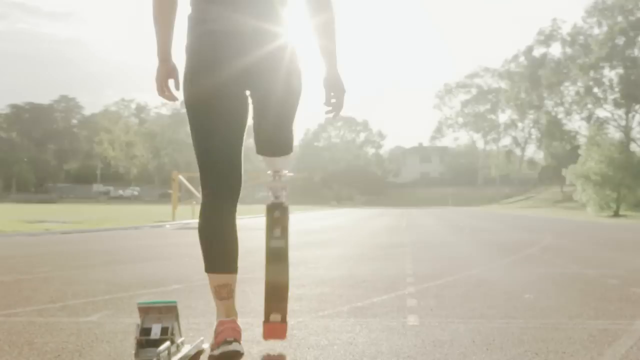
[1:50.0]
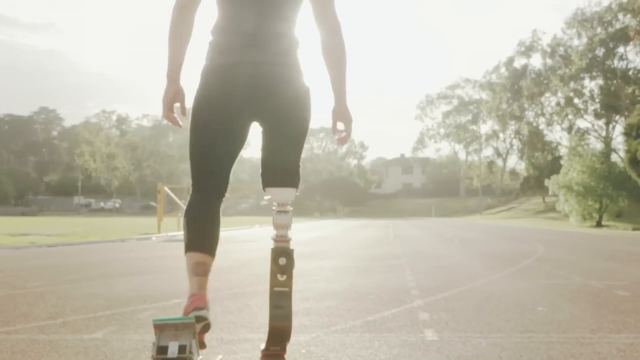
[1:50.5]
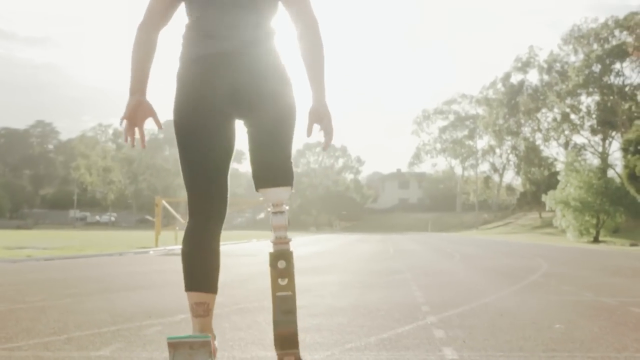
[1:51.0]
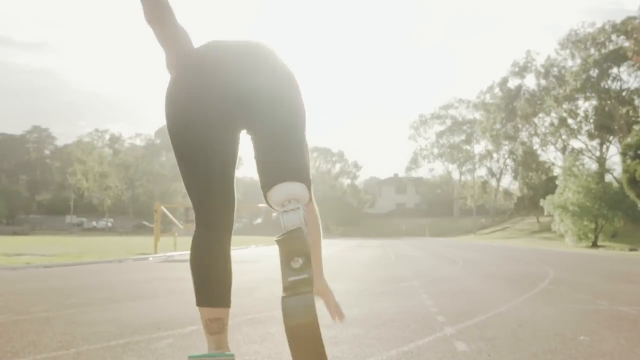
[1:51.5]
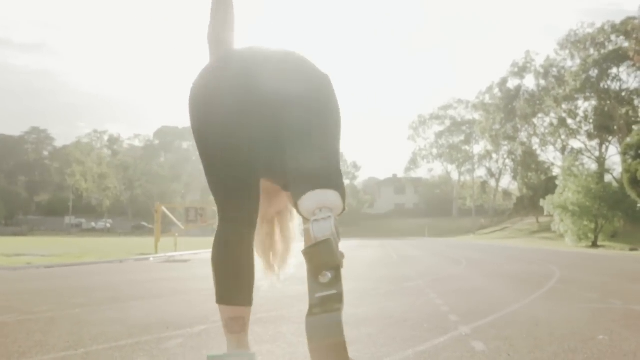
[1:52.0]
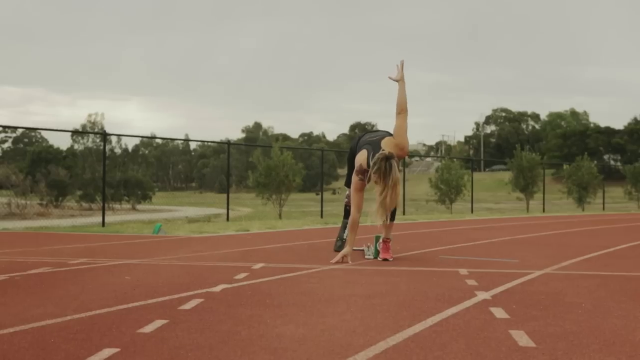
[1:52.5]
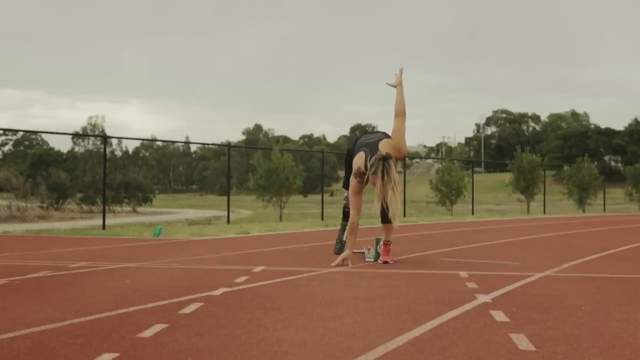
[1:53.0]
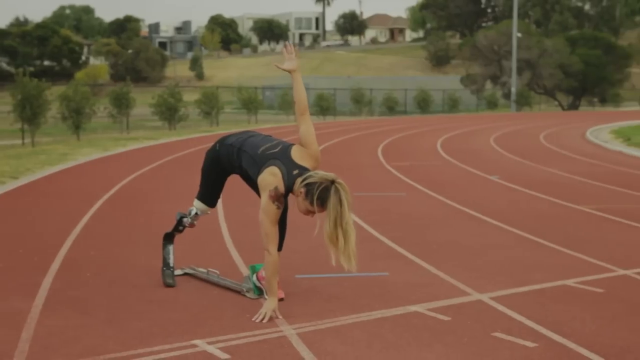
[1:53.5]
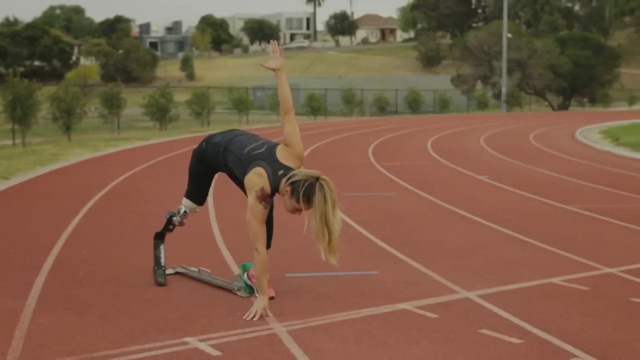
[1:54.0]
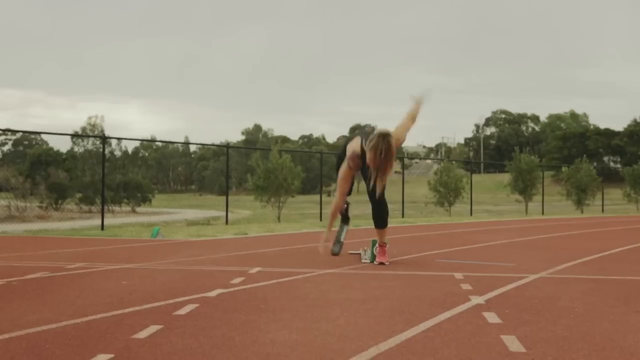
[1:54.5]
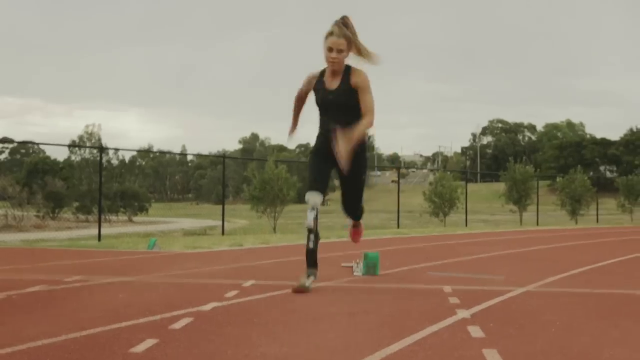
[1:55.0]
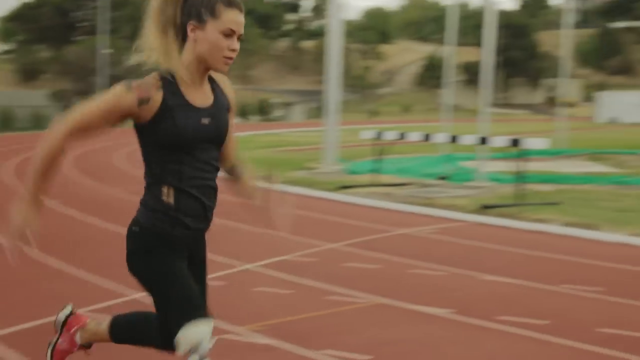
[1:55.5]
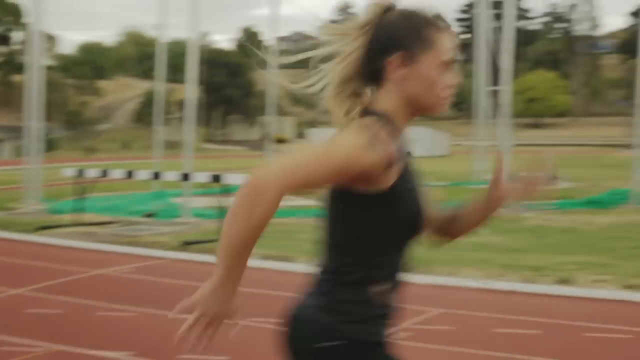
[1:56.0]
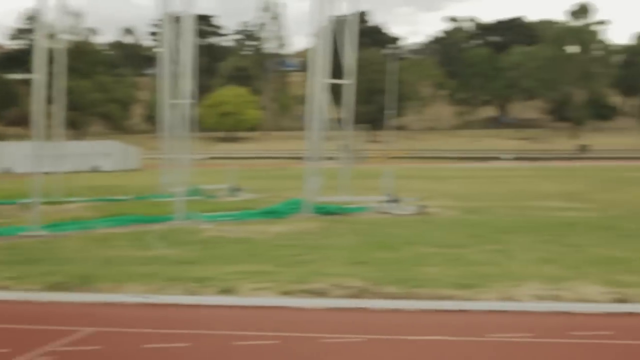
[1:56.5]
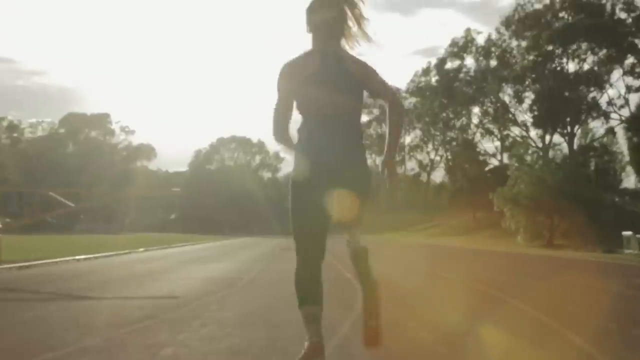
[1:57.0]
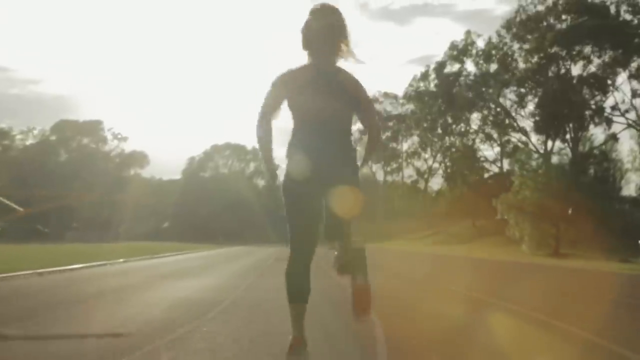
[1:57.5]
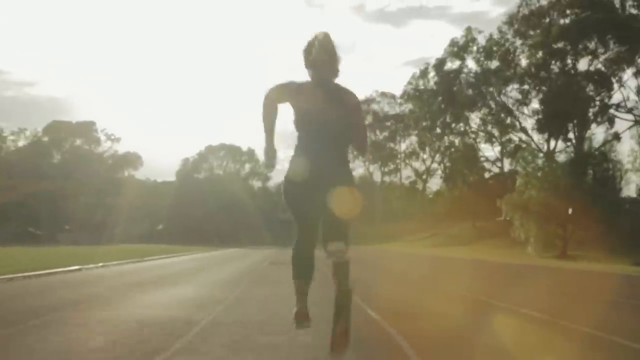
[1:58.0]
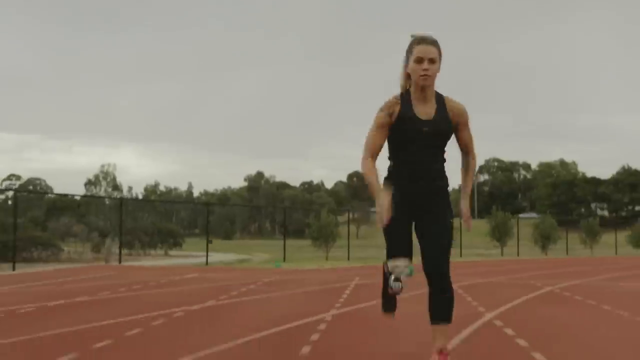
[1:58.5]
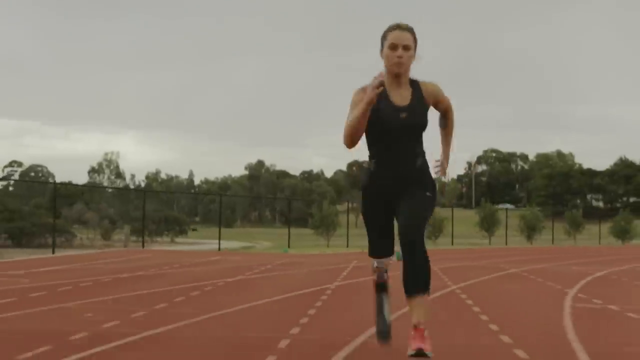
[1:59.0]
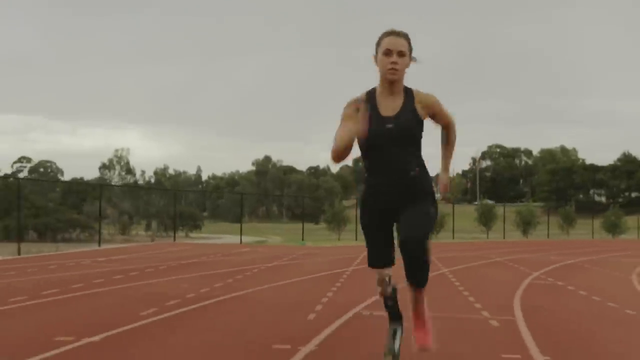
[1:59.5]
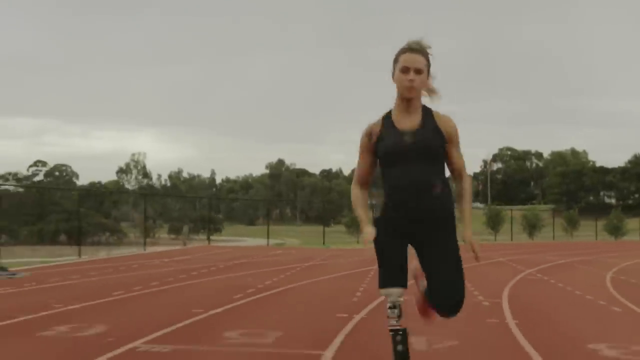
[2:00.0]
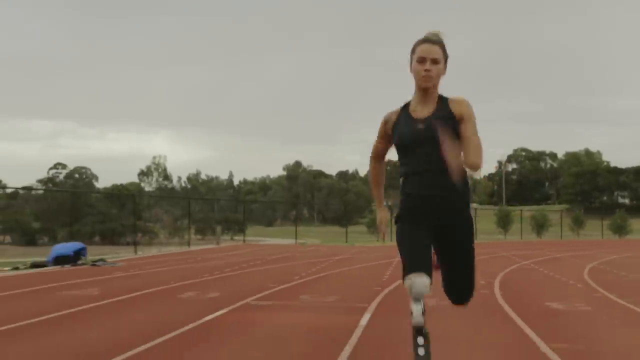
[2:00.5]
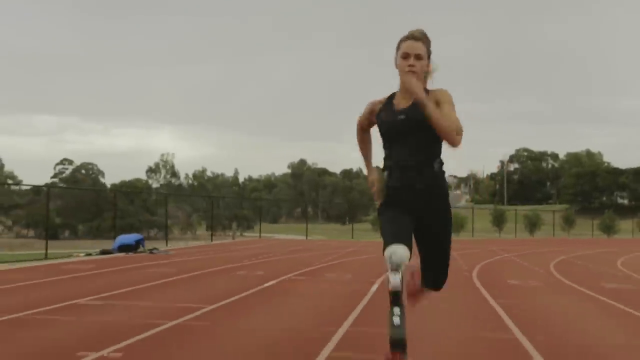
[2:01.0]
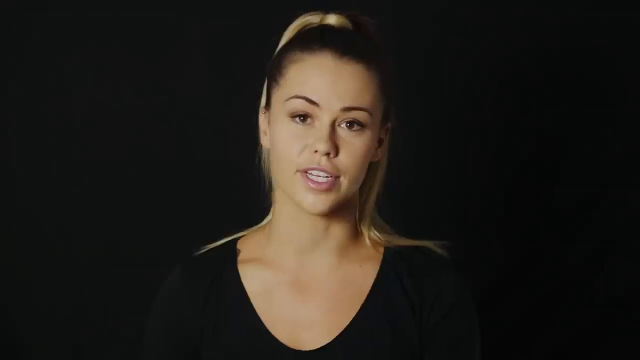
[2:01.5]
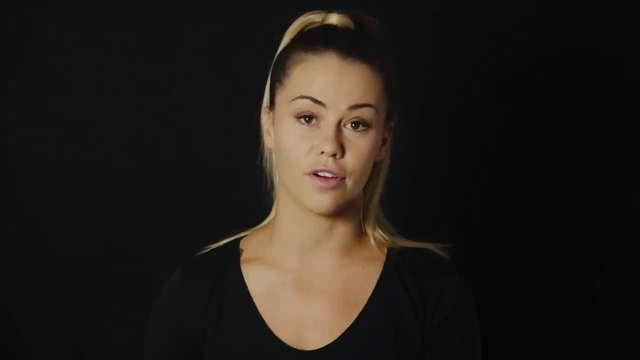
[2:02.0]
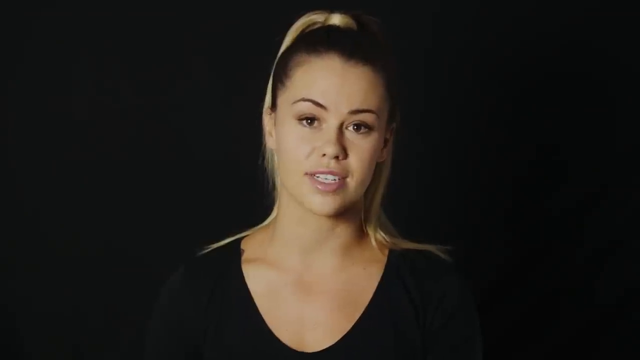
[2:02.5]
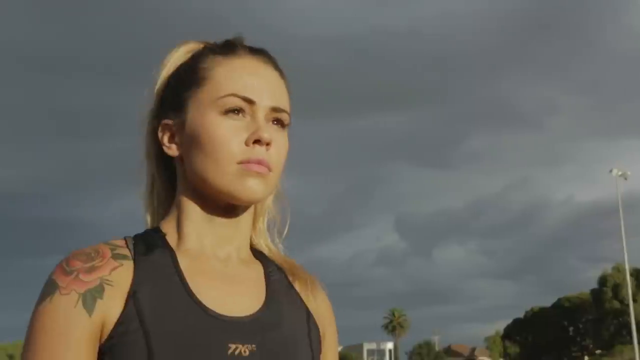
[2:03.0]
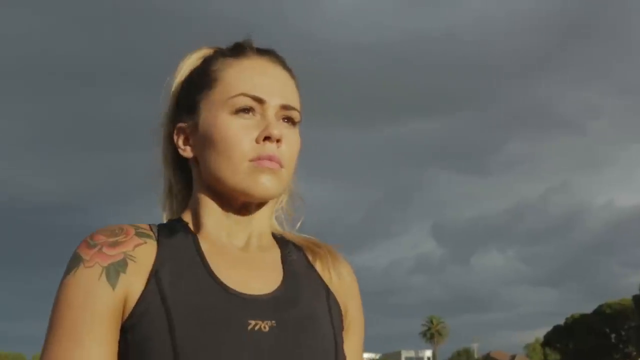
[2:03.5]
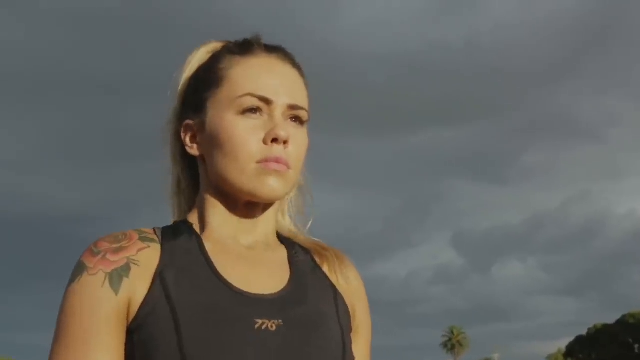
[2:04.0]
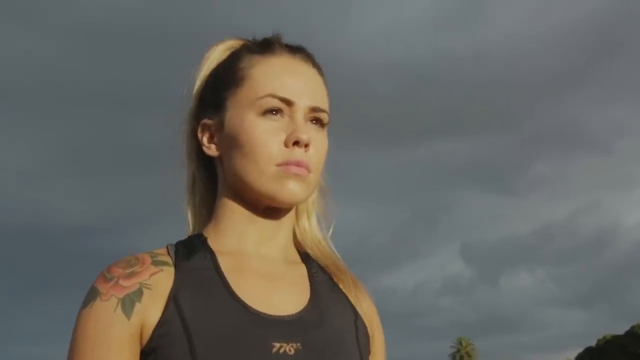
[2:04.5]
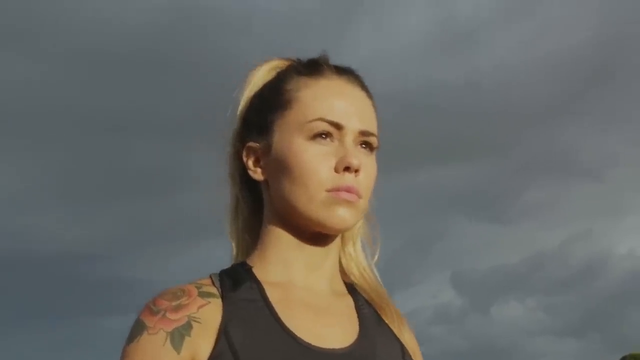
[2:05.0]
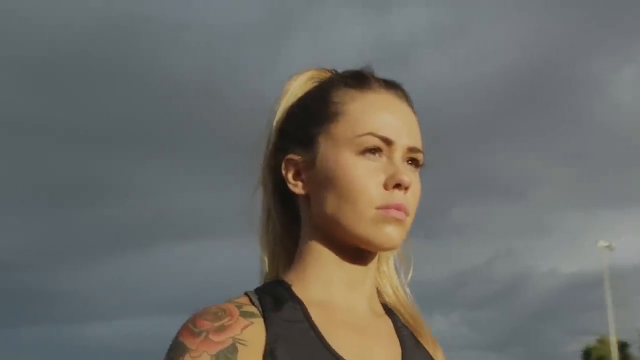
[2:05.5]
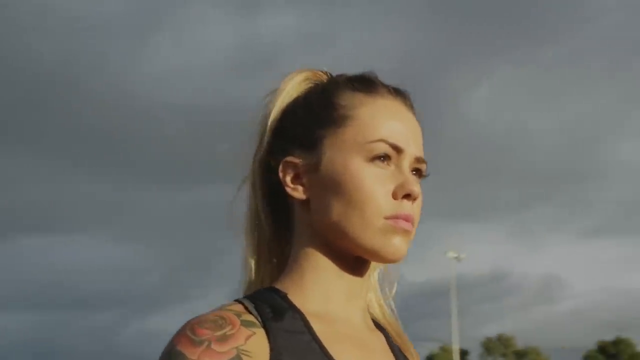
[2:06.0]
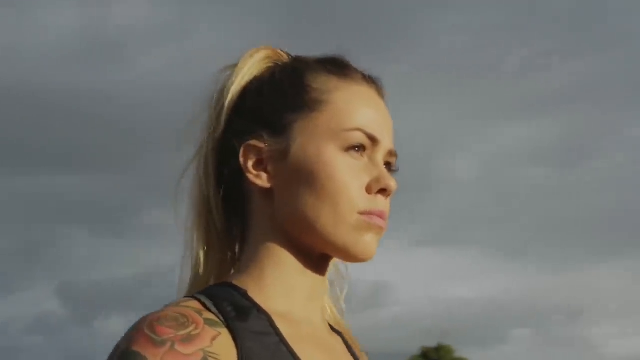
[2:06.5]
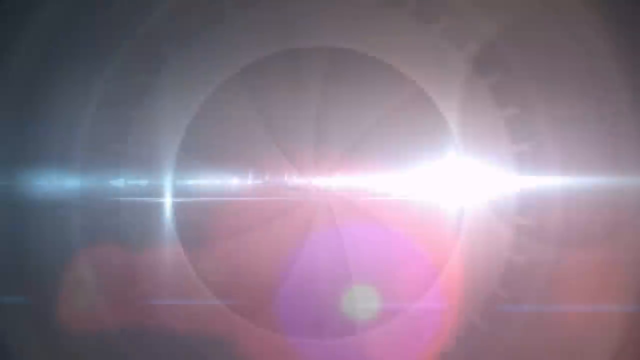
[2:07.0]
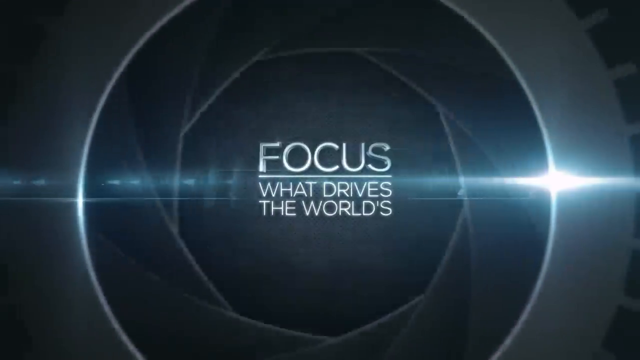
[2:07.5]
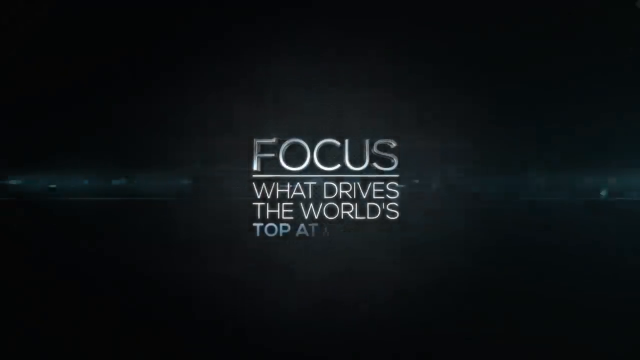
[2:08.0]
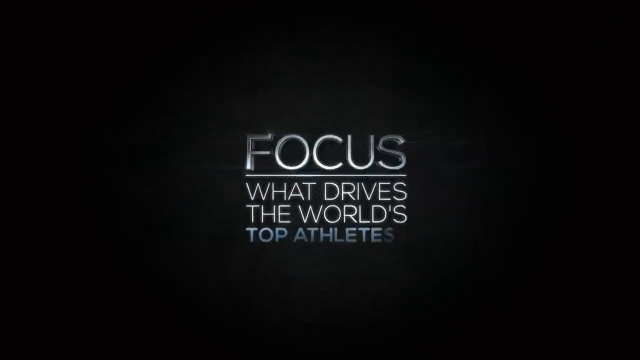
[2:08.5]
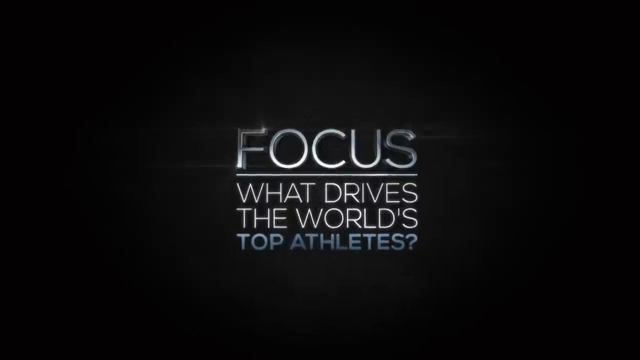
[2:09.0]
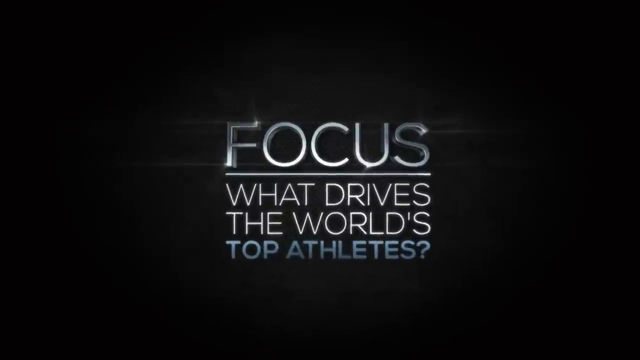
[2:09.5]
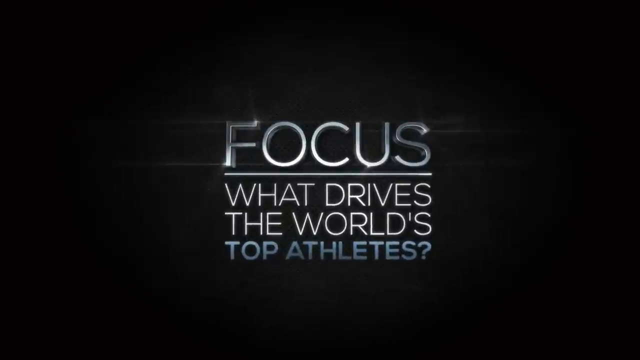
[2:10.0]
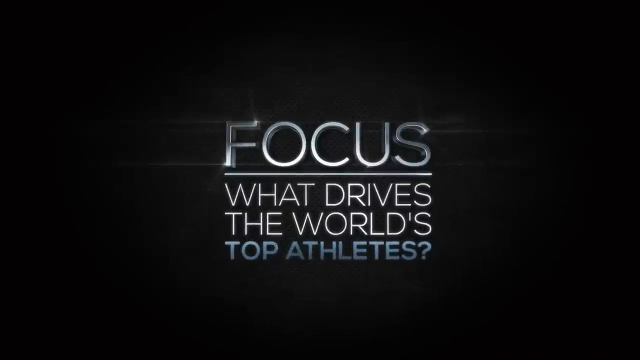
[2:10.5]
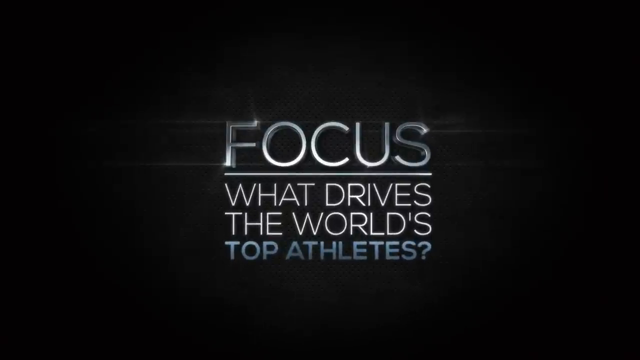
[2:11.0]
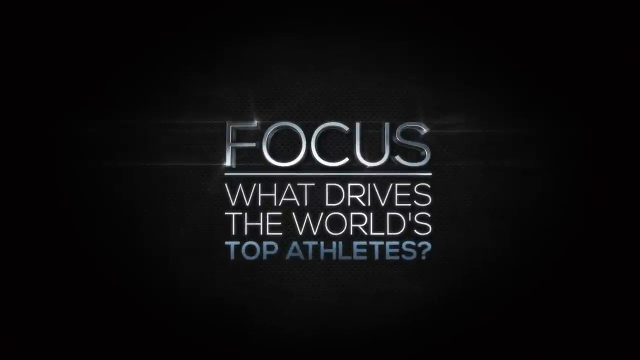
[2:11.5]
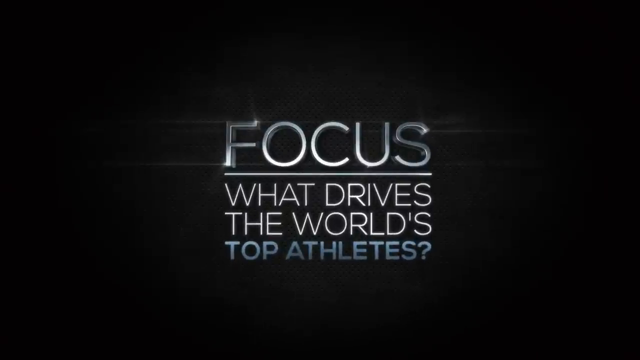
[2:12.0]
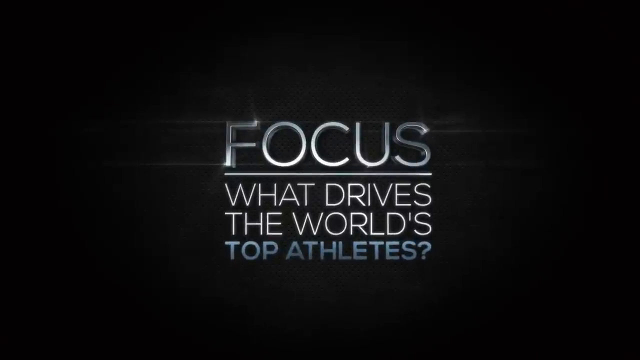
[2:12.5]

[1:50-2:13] A Paralympic athlete in training is filmed from behind preparing to run down a track, wearing a prosthetic leg on her right side. She gets into position and begins running down the track. The track is empty, with no one else practicing. She is filmed from several different angles as she runs. She is then interviewed in a studio in front of a black backdrop, wearing a black t-shirt with her hair pulled up in a ponytail, speaking to someone behind the camera. Next, a close-up shows her face outdoors on the track as the camera begins to move around her head. A closing title card that looks like the lens of a camera opening says in the center "Focus. What drives the world's top athletes?"